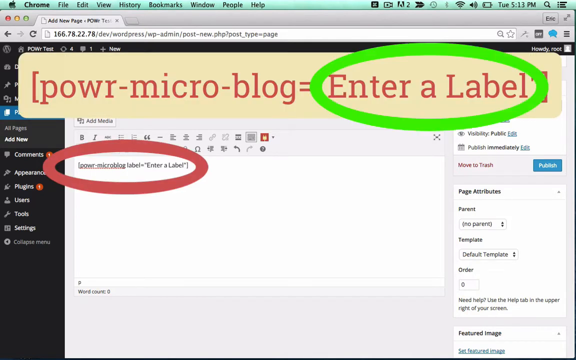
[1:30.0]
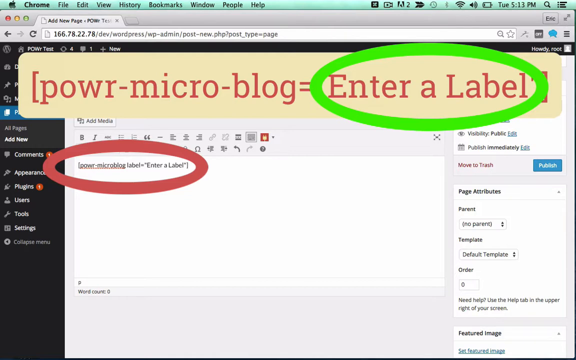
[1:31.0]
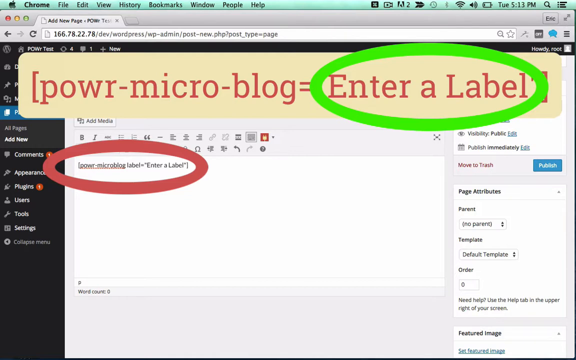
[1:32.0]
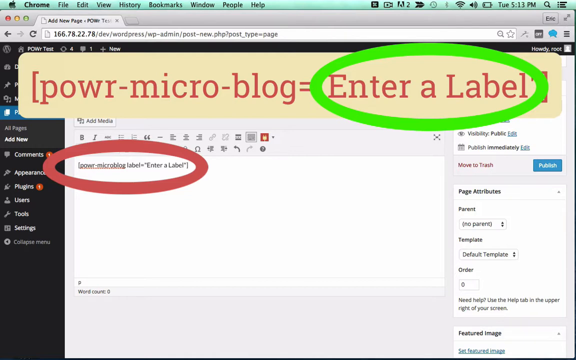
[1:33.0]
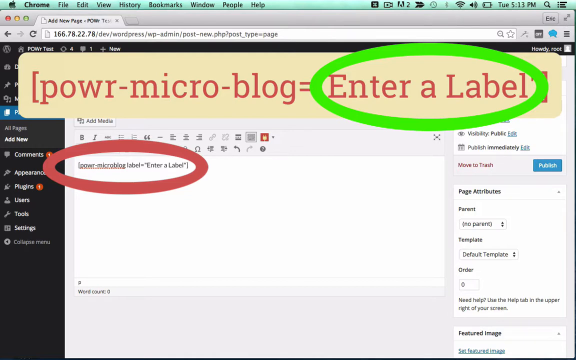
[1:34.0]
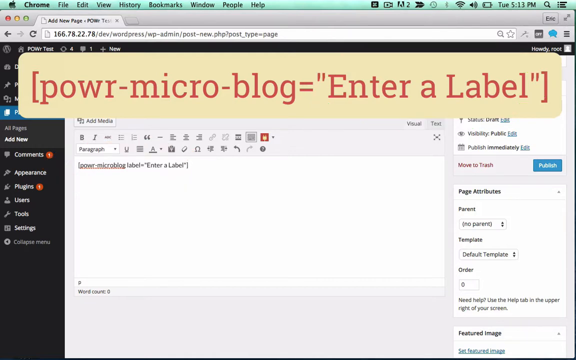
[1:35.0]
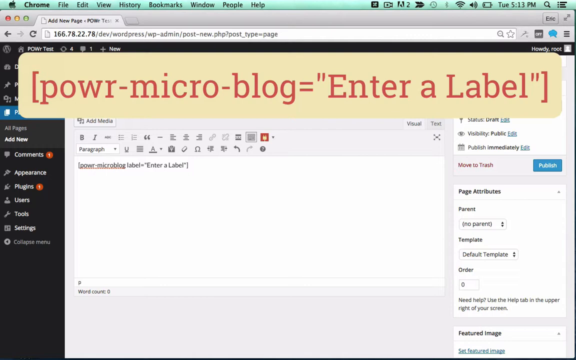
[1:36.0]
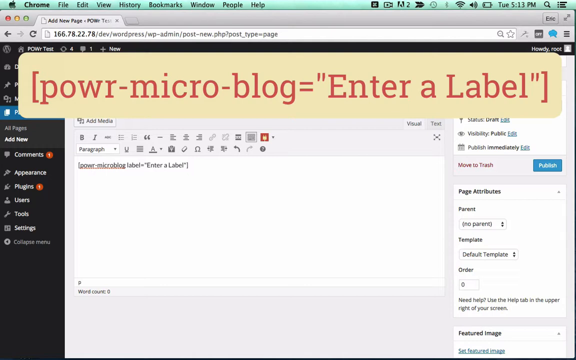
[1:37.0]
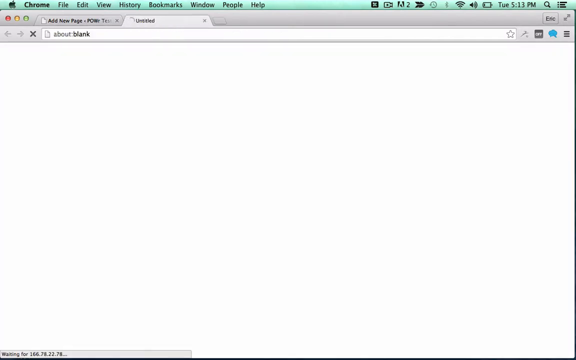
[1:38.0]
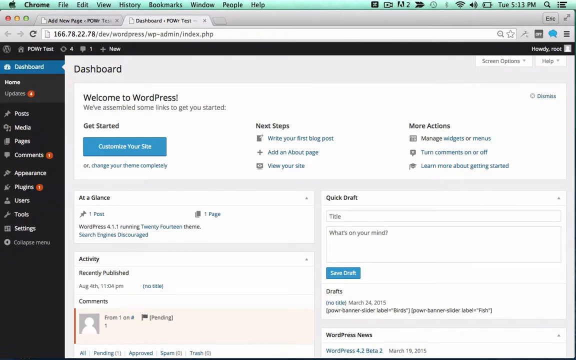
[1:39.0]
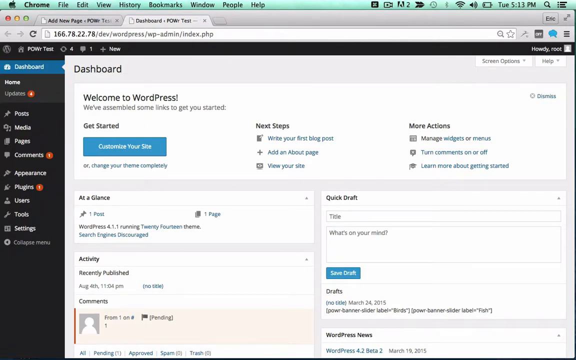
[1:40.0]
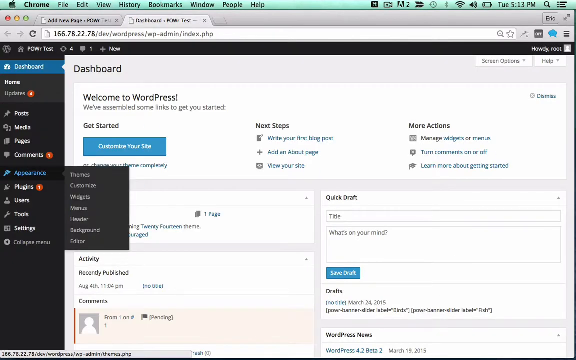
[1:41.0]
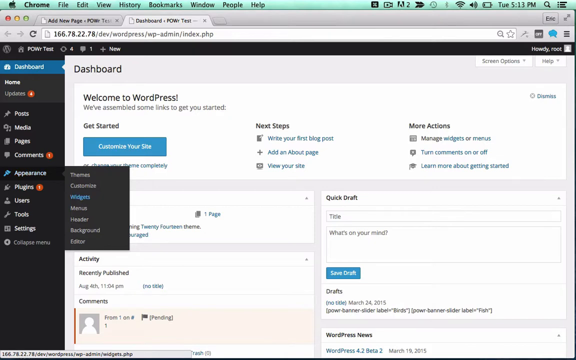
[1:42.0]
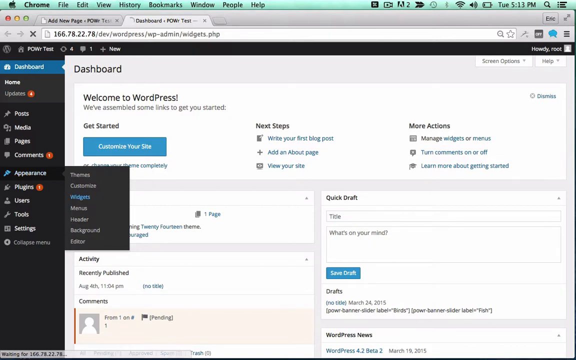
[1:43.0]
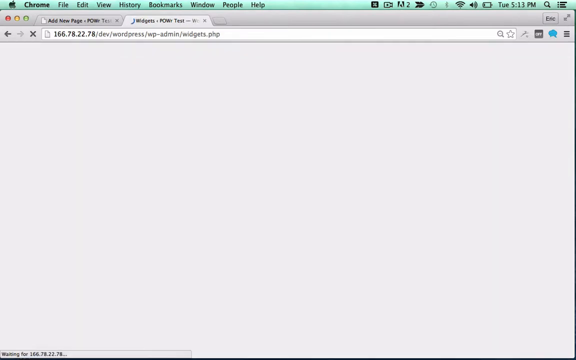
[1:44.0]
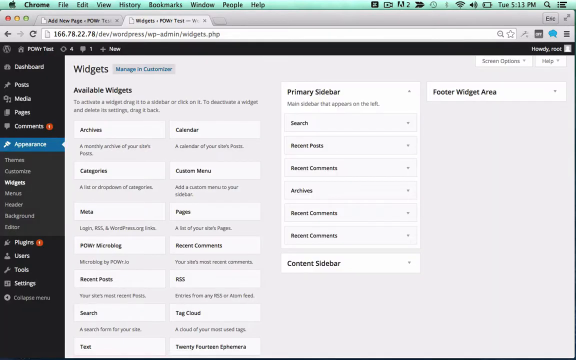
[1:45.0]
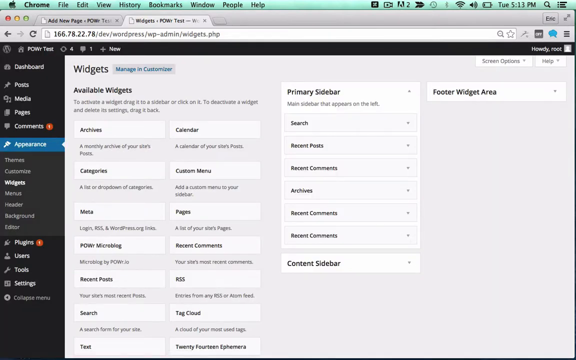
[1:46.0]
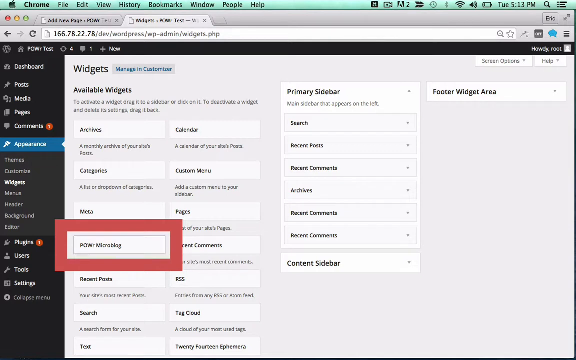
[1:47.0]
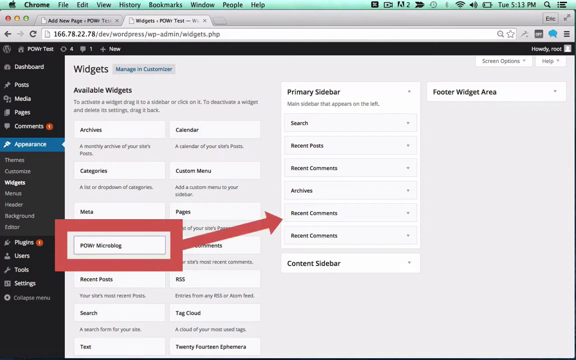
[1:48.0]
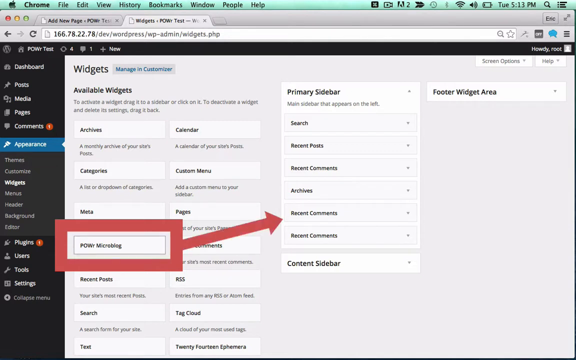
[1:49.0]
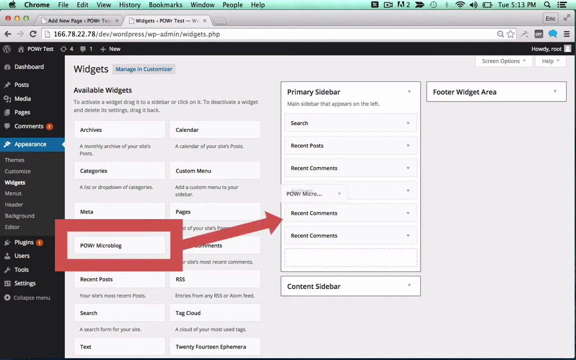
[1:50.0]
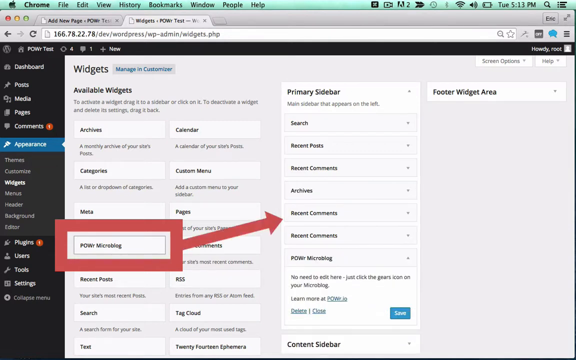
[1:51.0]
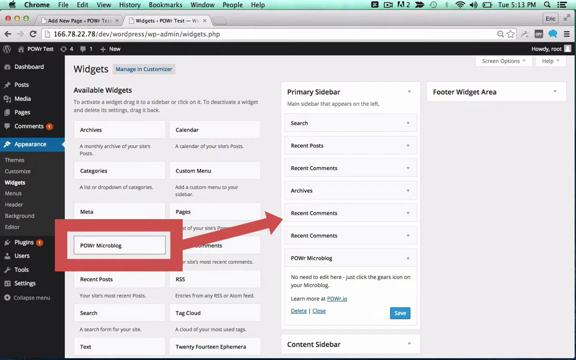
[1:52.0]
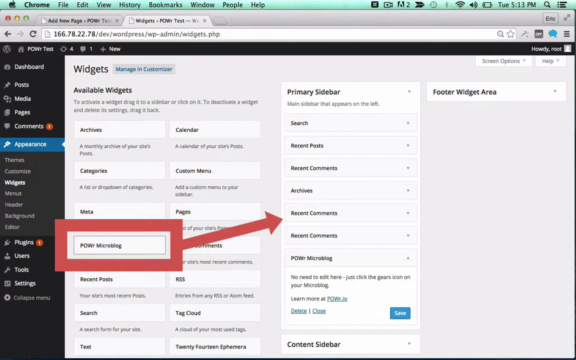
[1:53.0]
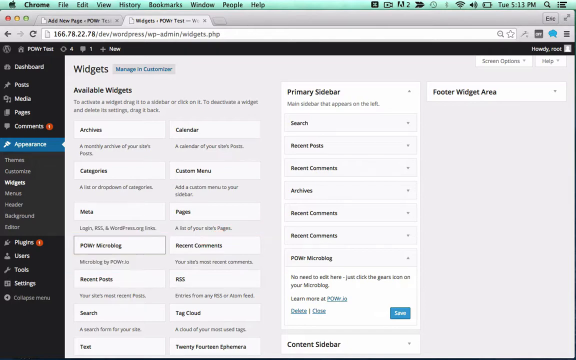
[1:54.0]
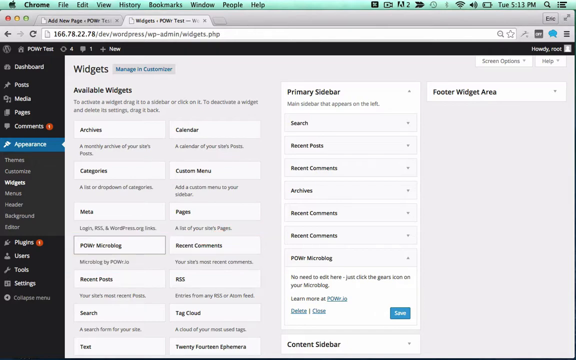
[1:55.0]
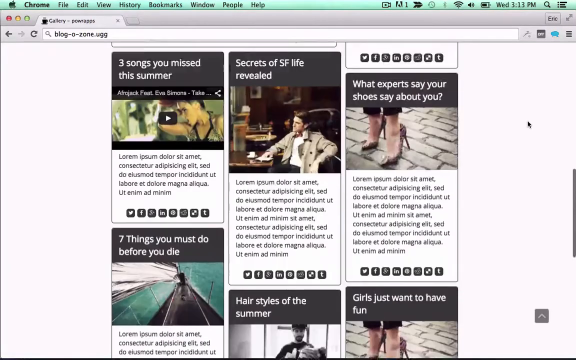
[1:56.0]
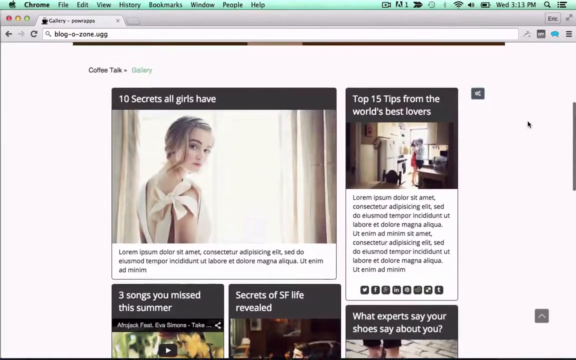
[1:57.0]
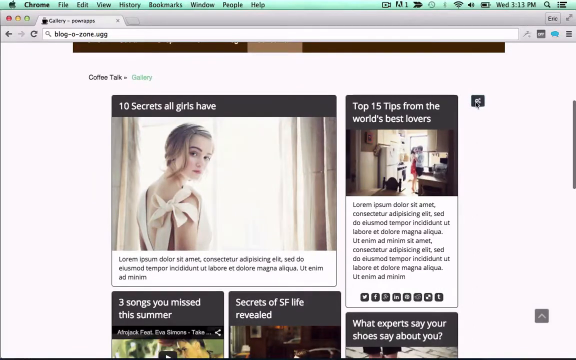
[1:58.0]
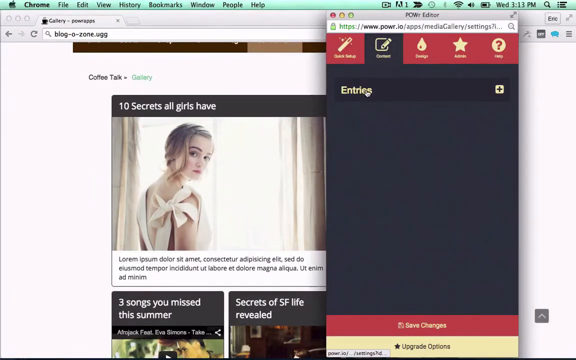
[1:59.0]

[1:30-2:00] The code written into the text box below is circled in red, and the same text is shown in a text box above in big text: power microblog equals "enter a label", with "enter a label" circled in green. The highlighting then disappears and a new tab opens showing the original WordPress dashboard, which says "welcome to WordPress". They click appearance and then widgets, which opens the widget tab, and a red text box and border goes around power micro blog. Primary sidebar opens and they click recent comments, which brings down more drop-downs. The new blog then appears with various blog posts, such as "10 secrets all girls have", and the power editor tab opens on the right-hand side.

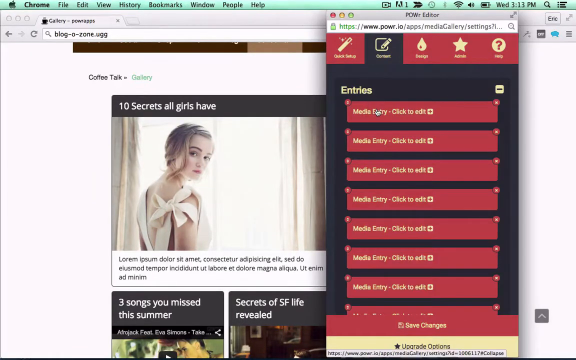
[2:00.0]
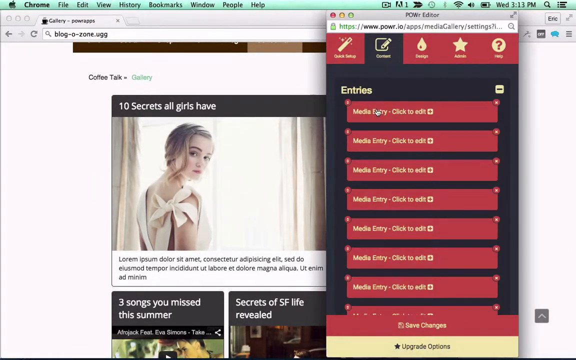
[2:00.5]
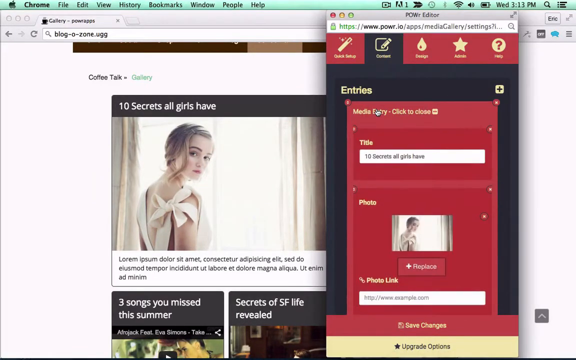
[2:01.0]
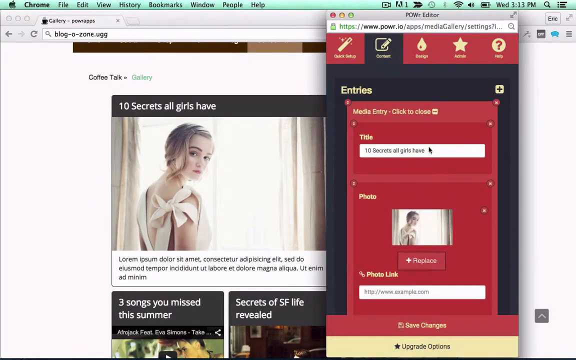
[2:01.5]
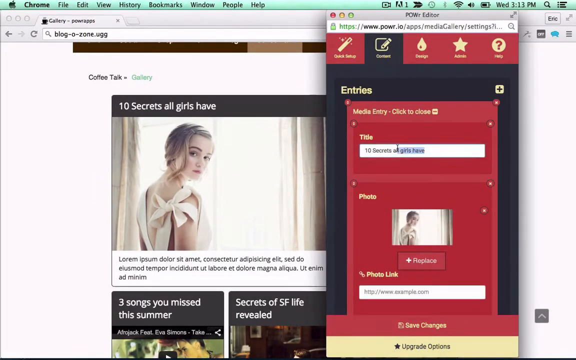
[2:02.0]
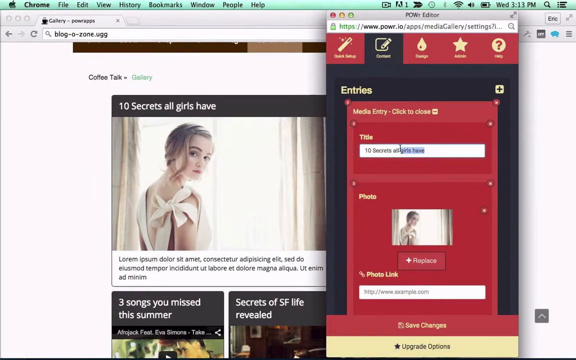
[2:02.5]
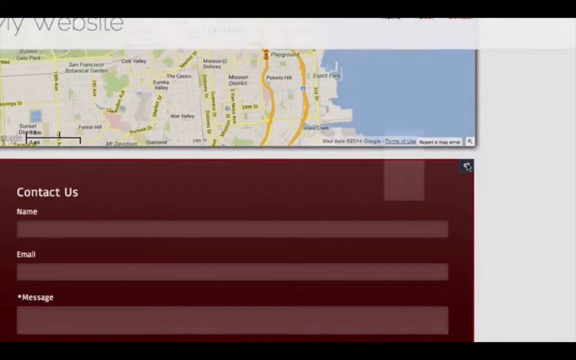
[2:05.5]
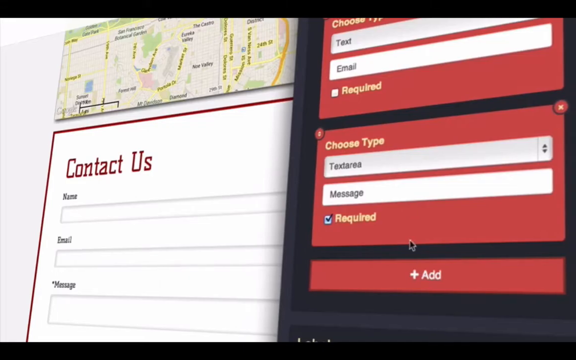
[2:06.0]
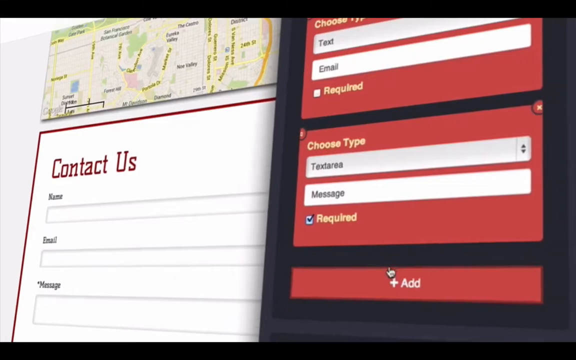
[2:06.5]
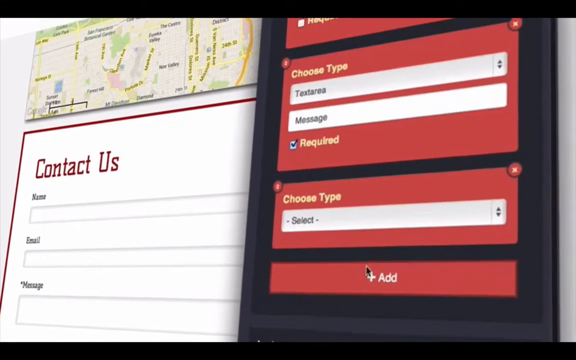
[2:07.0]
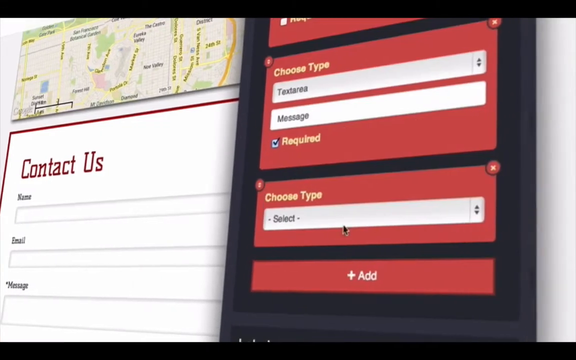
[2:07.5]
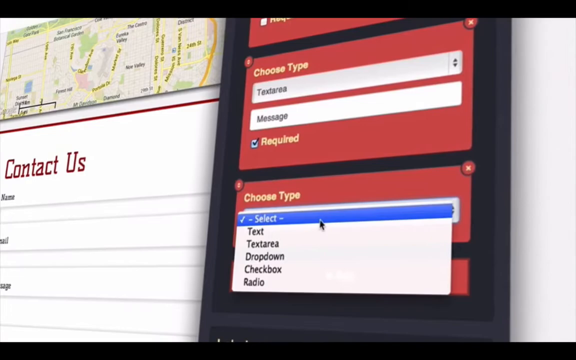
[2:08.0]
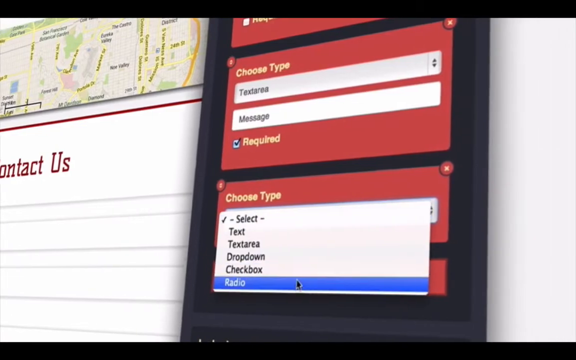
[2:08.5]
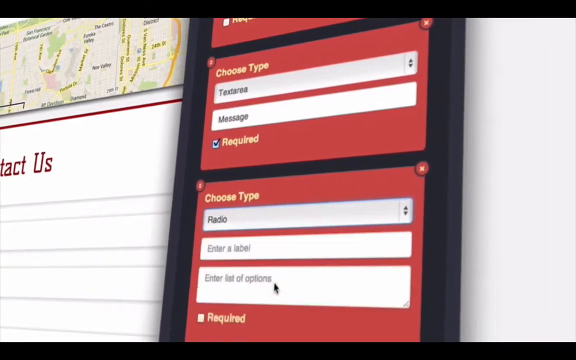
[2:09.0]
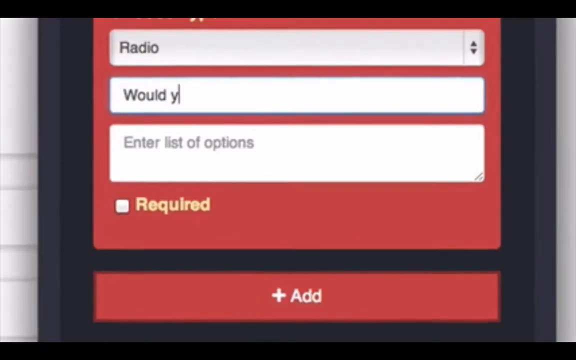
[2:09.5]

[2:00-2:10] They open the content and then entries tab and delete the part that says "girls have", so it reads just "ten secrets all". The screen goes completely black, then a moving 3D digital recording of the website appears, moving from left to right and zooming in on various pieces. It zooms in to a text box and pans across the screen, zooms in to where it says "choose type" and the drop-down offering text, drop-down, checkbox, radio and so on, and zooms in to the questions the person is typing into the box.